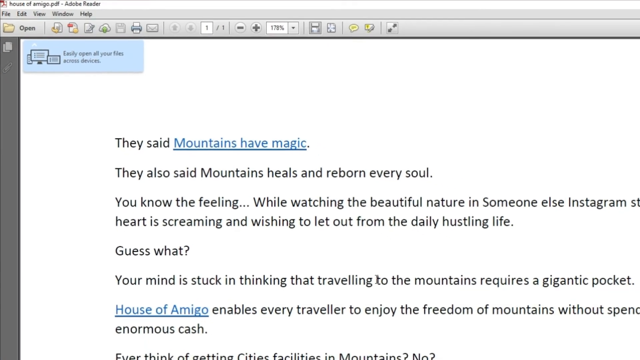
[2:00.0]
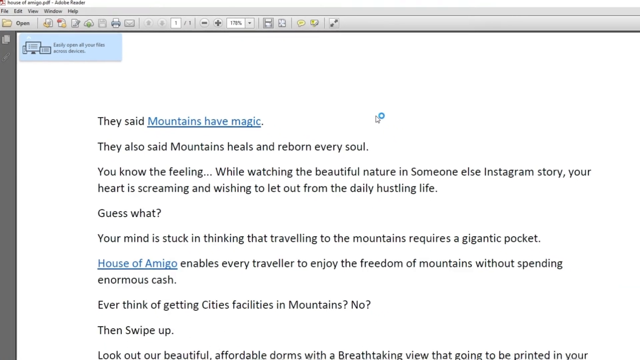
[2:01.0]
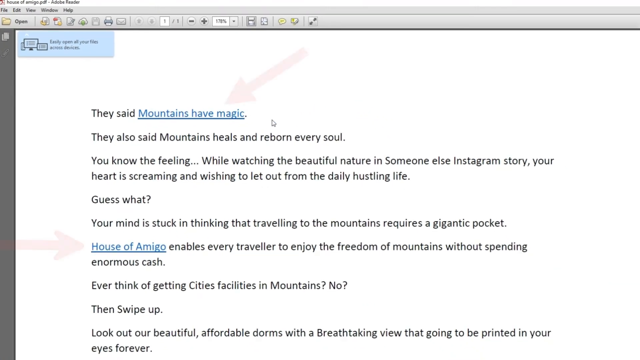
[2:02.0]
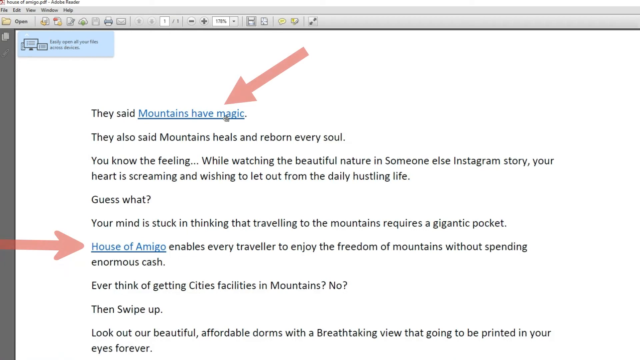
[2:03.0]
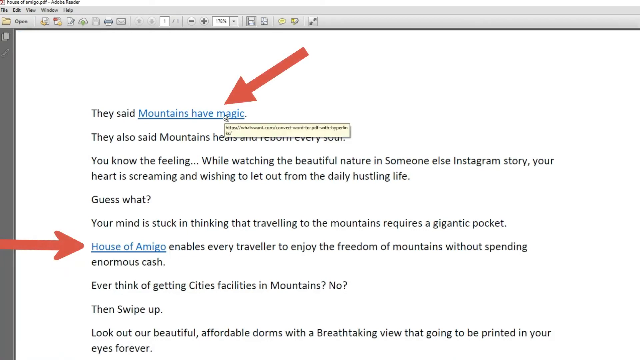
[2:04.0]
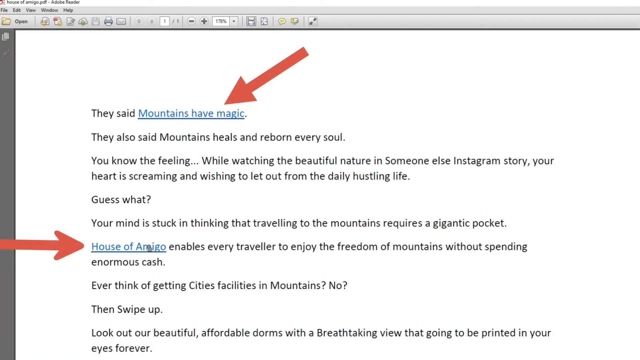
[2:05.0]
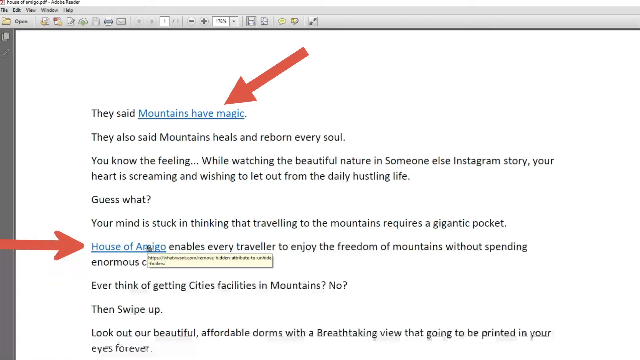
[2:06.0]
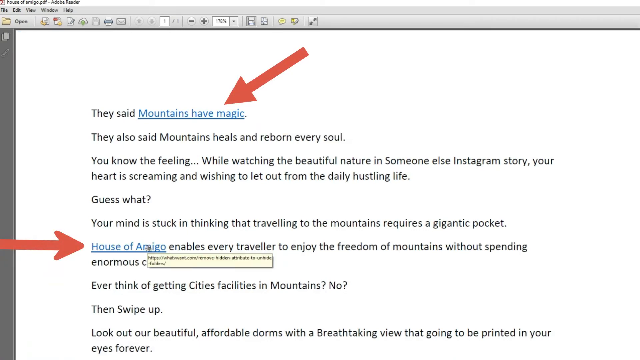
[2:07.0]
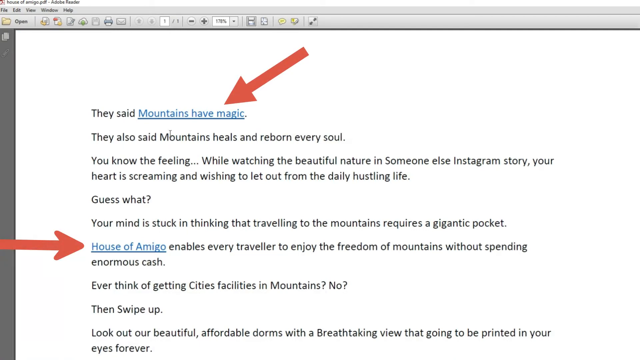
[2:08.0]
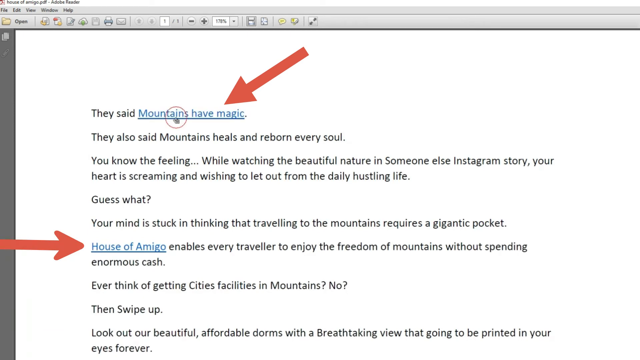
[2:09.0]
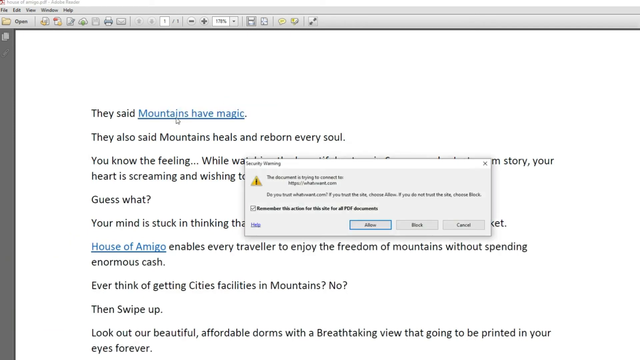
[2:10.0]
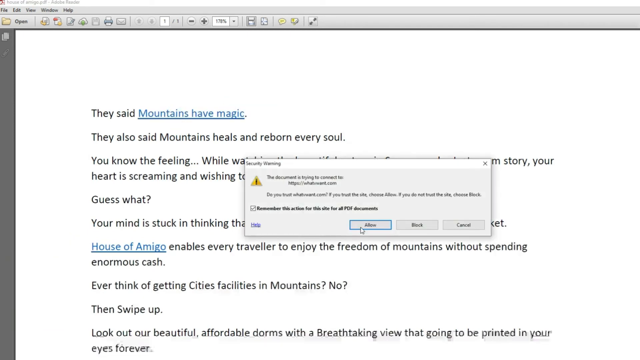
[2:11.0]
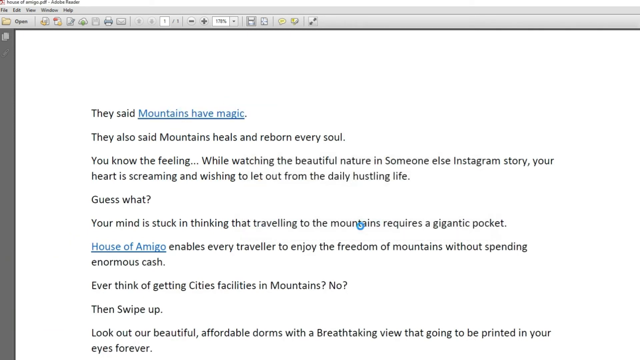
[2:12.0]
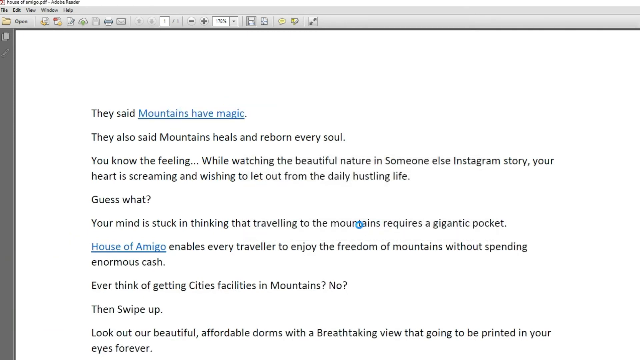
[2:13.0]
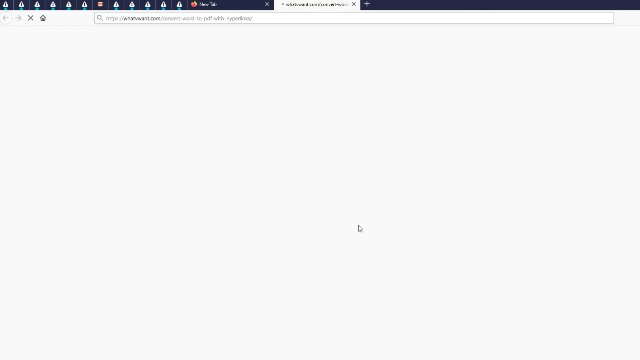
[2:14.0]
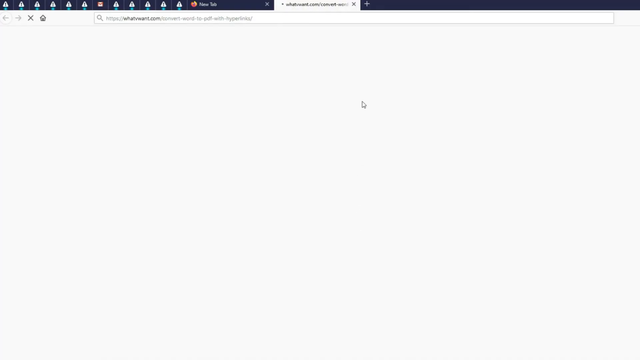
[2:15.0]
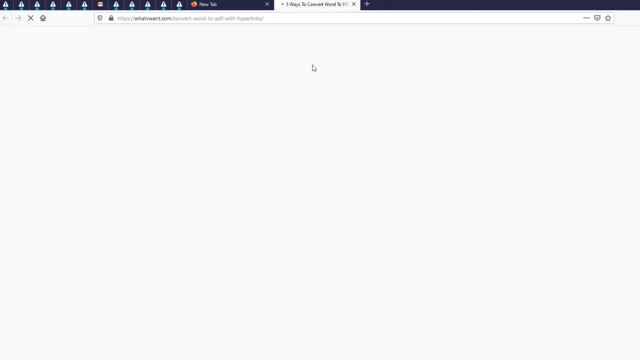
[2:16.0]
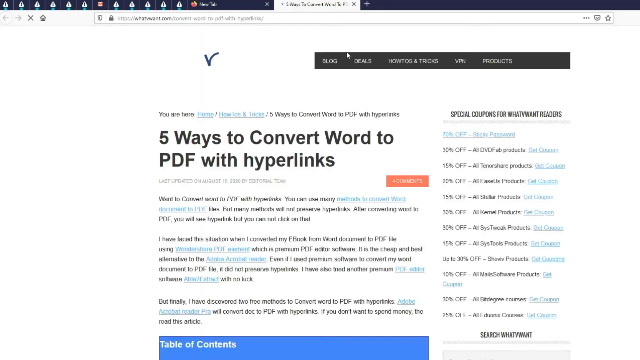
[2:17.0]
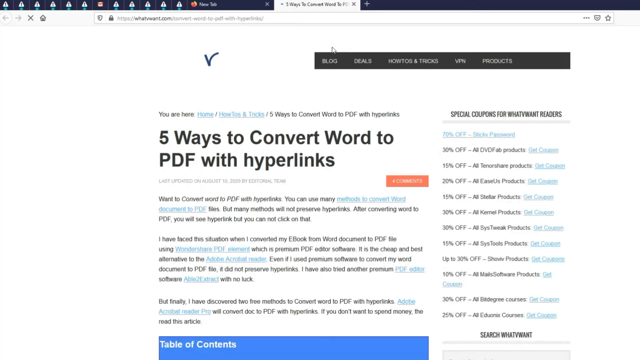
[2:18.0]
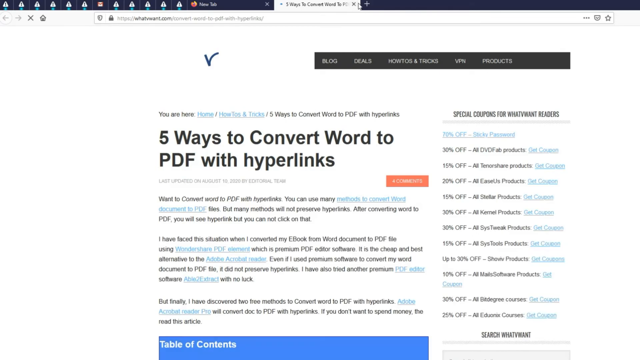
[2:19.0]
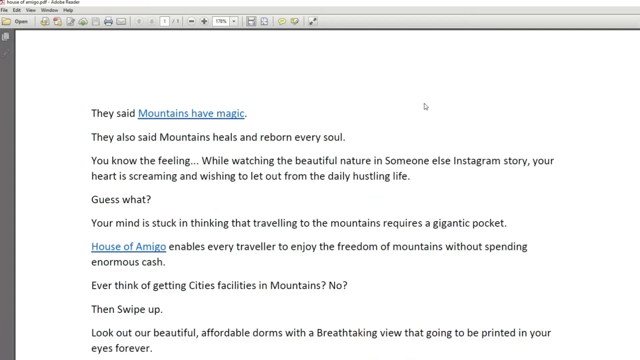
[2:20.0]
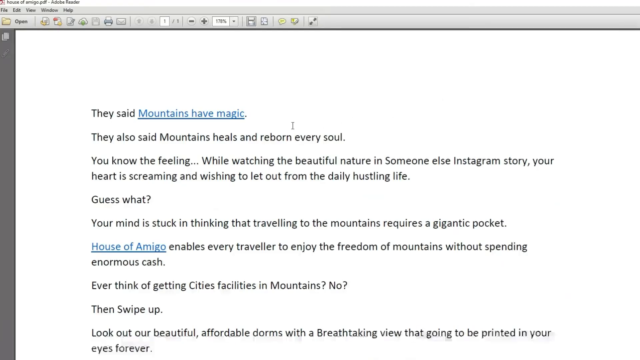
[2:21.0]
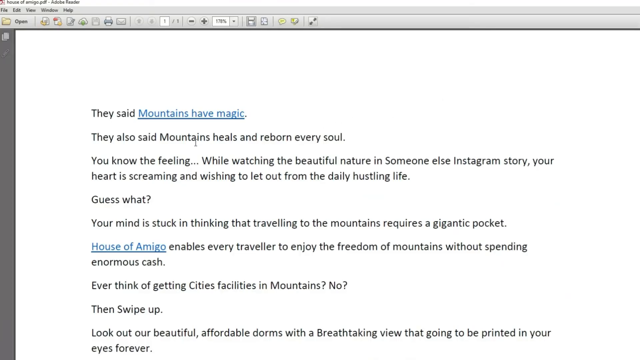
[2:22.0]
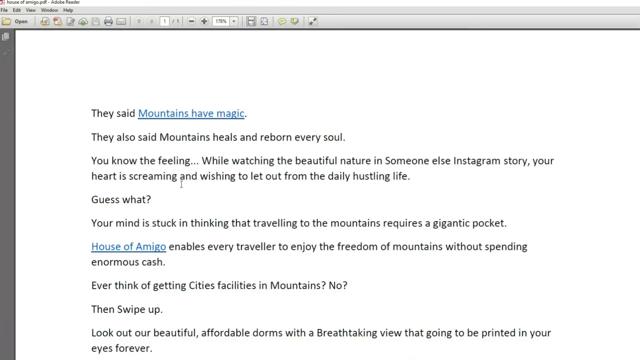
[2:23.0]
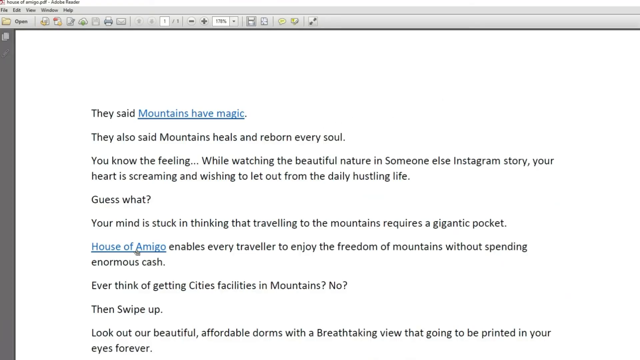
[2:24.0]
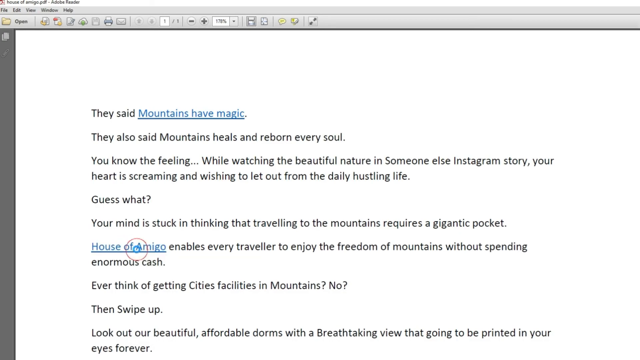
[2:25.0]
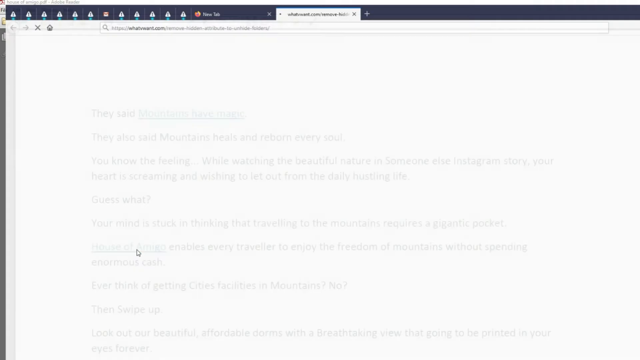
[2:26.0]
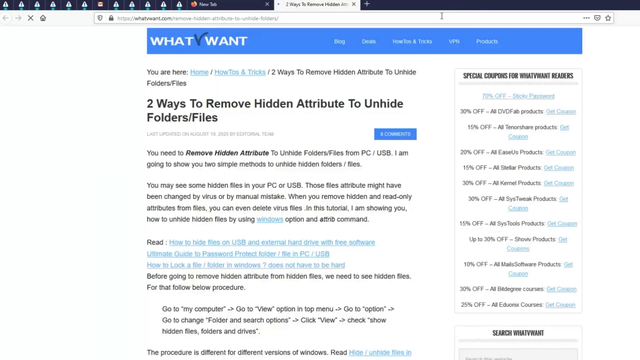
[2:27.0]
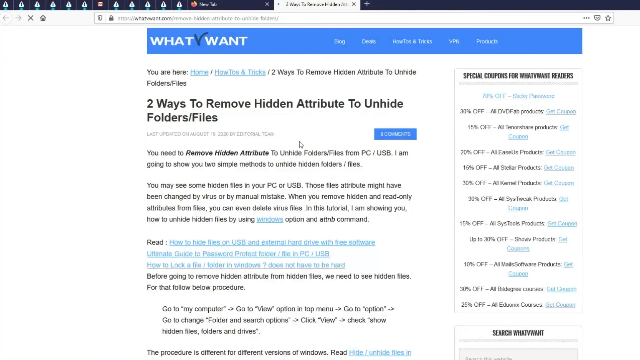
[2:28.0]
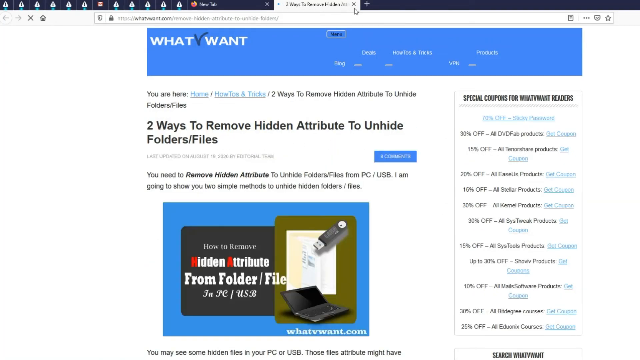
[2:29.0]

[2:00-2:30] The screen zooms out again, and two more red arrows point toward the hyperlinks. The mouse hovers briefly over each one, and a small yellow pop-up shows the URL of each hyperlink while hovered. The mouse then clicks the top hyperlink, "mountains have magic". A security warning pop-up appears with buttons reading allow, block and cancel; the mouse hovers over allow and clicks it. A web browser with many tabs open appears, the website opens, and its title reads "five ways to convert Word to PDF with hyperlinks", with some of the text on the page. The tab is closed and the window is minimized; many other tabs are open in the top left. The browser looks like Firefox.